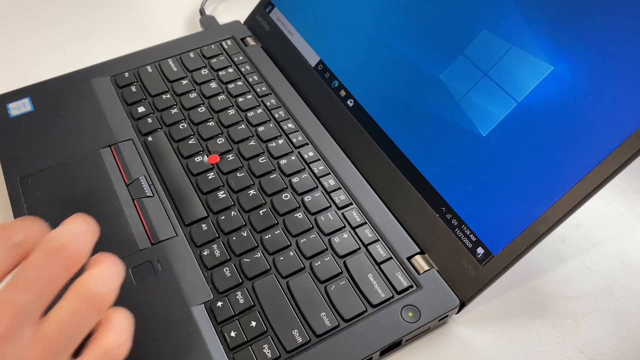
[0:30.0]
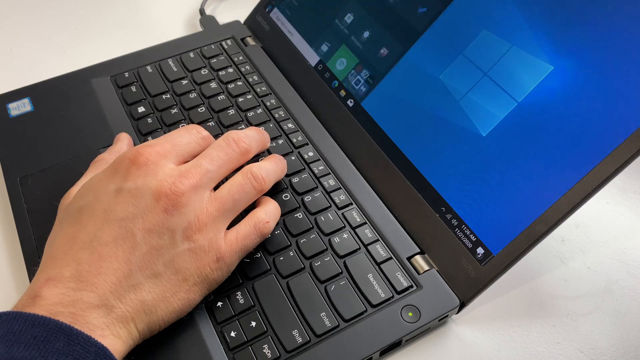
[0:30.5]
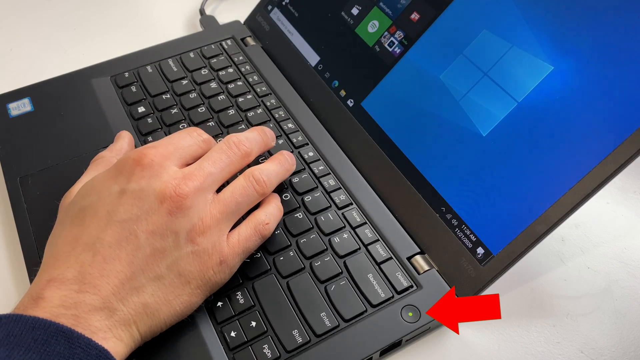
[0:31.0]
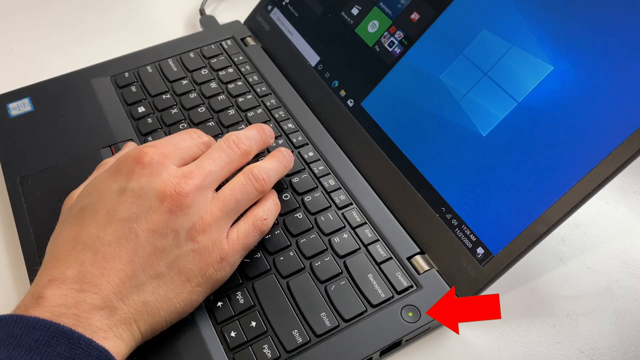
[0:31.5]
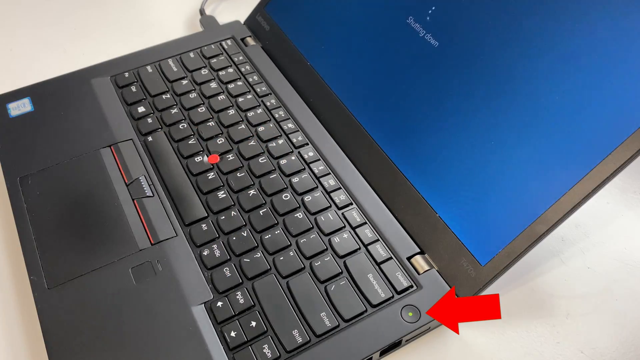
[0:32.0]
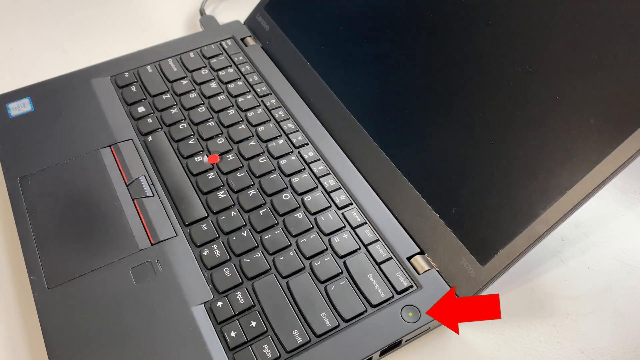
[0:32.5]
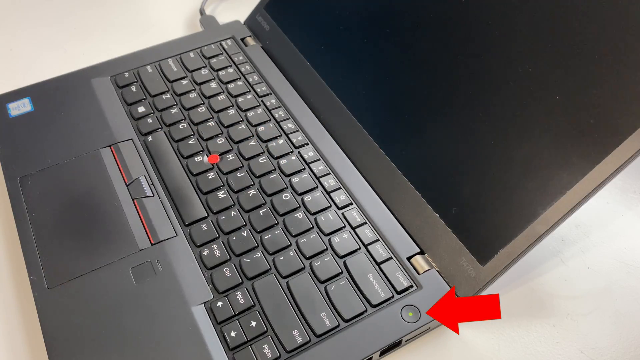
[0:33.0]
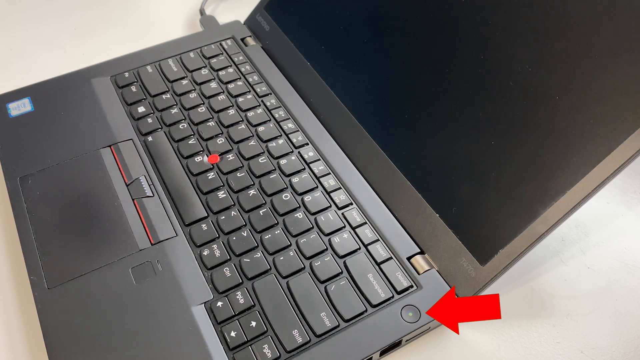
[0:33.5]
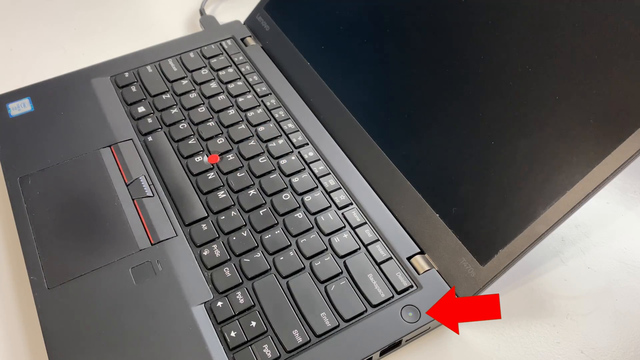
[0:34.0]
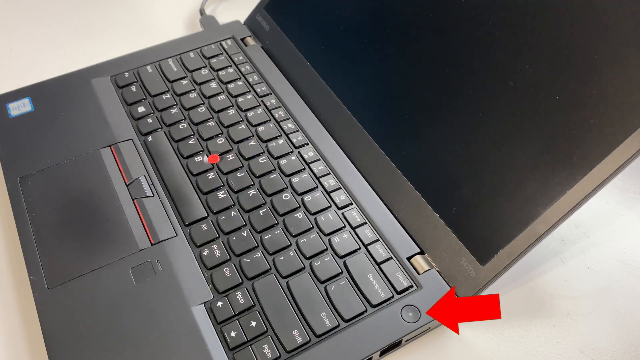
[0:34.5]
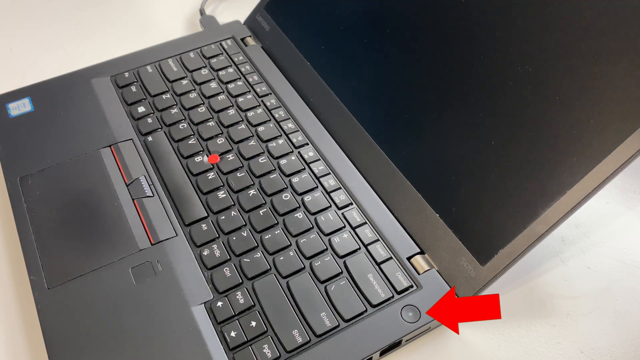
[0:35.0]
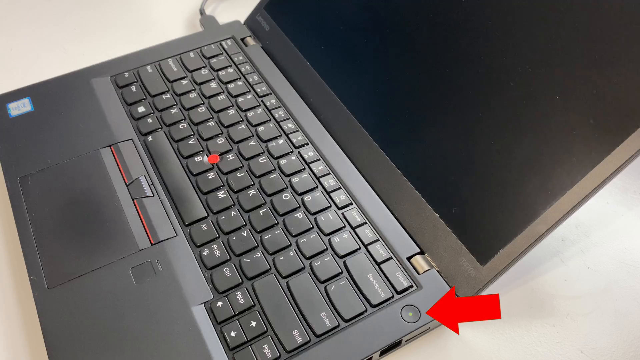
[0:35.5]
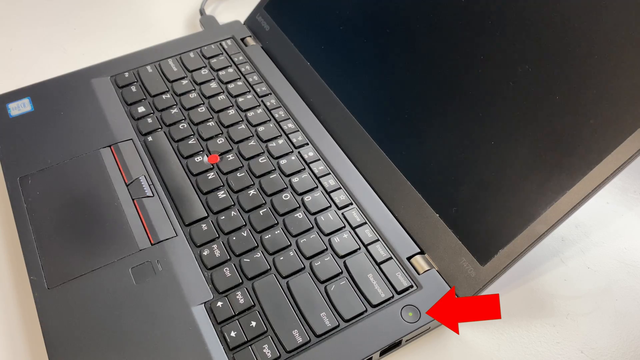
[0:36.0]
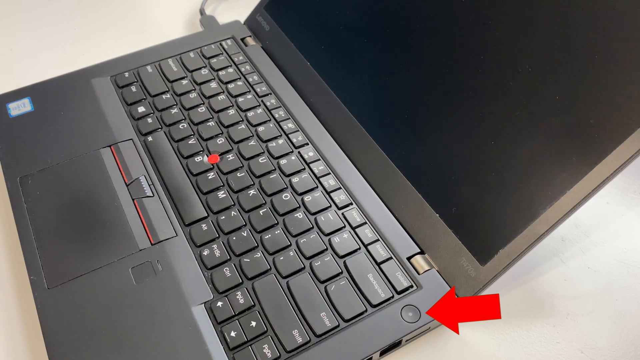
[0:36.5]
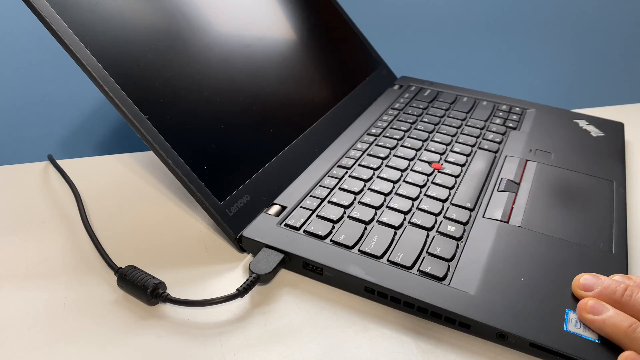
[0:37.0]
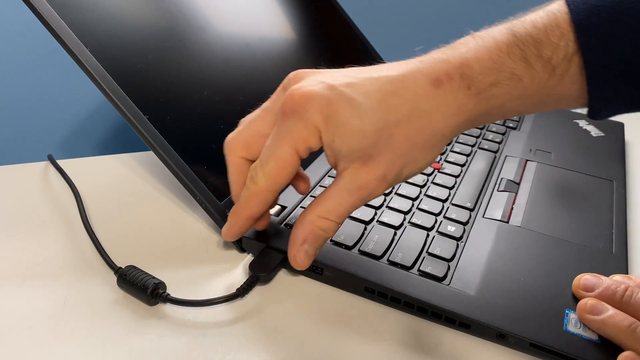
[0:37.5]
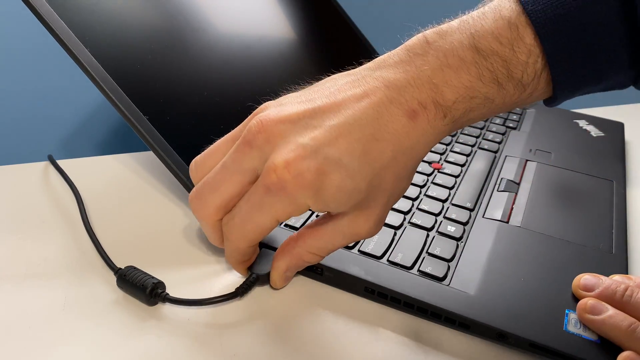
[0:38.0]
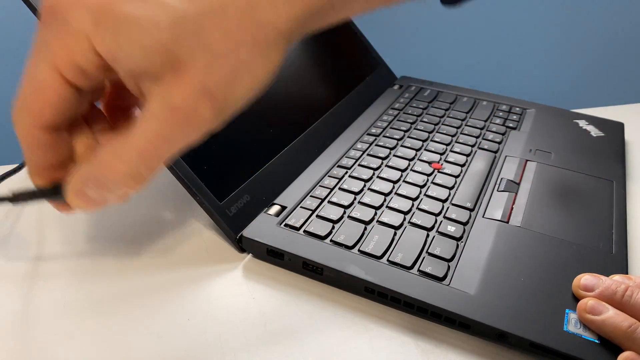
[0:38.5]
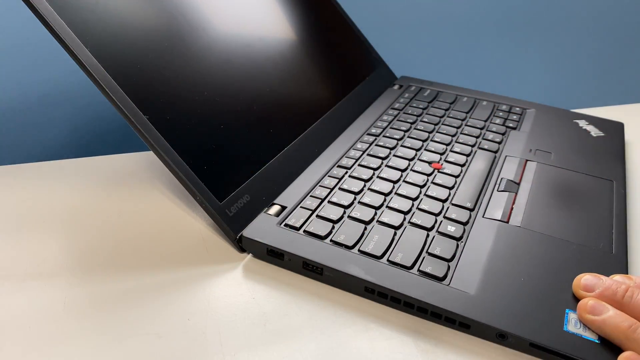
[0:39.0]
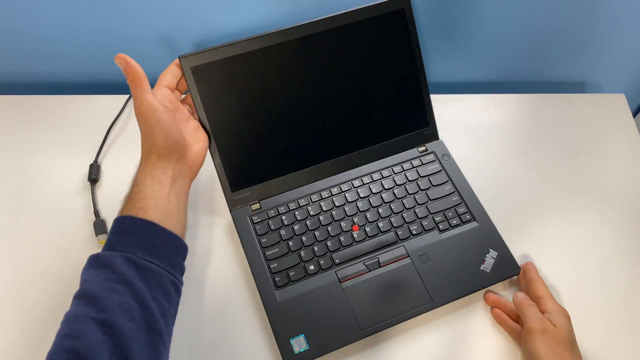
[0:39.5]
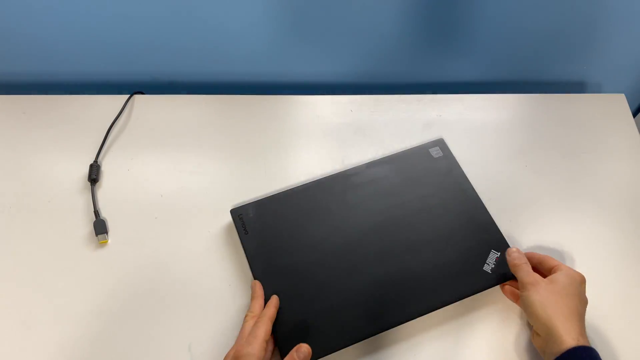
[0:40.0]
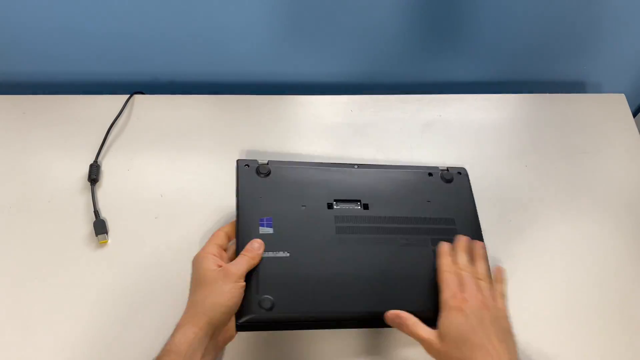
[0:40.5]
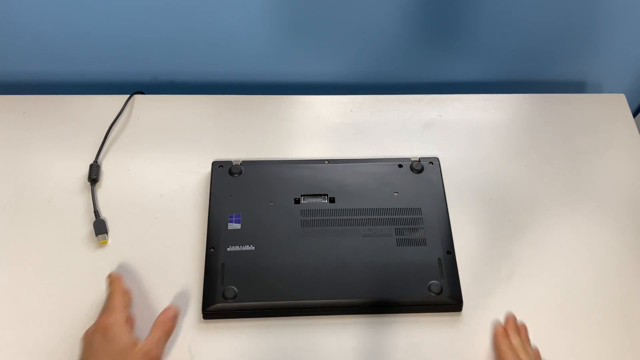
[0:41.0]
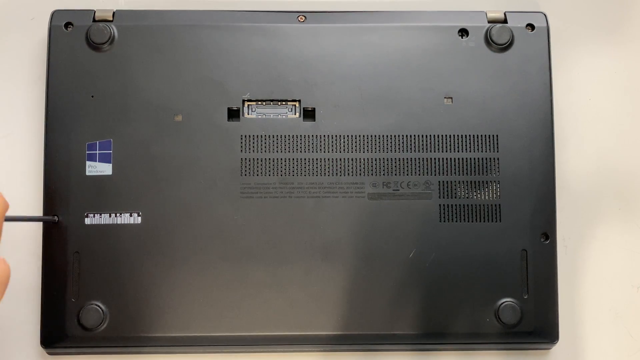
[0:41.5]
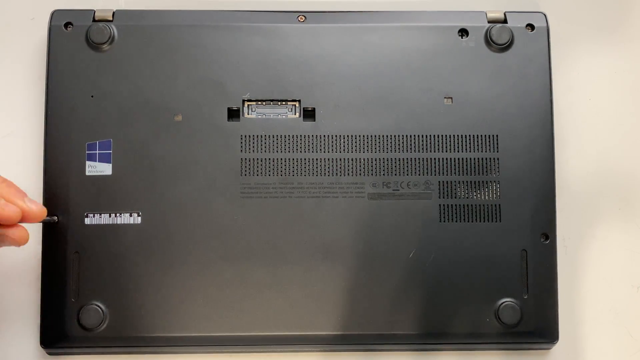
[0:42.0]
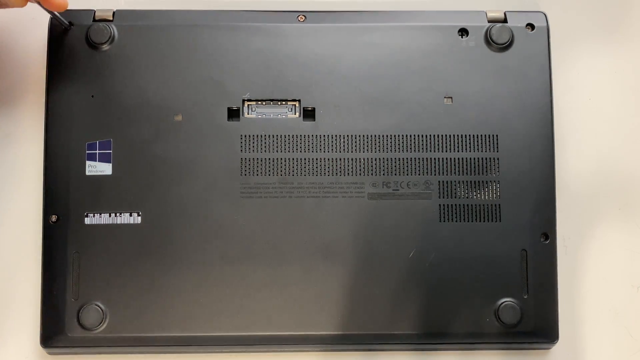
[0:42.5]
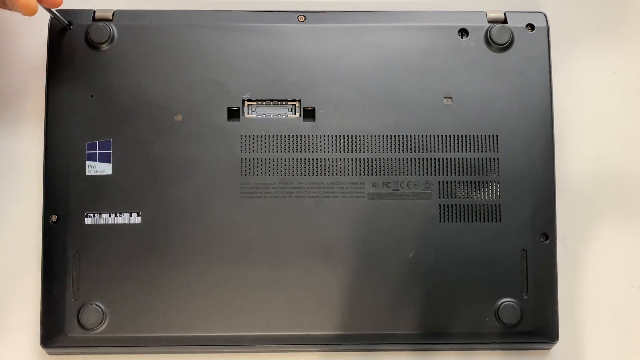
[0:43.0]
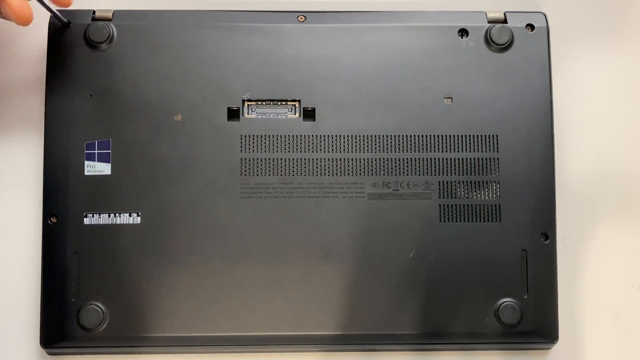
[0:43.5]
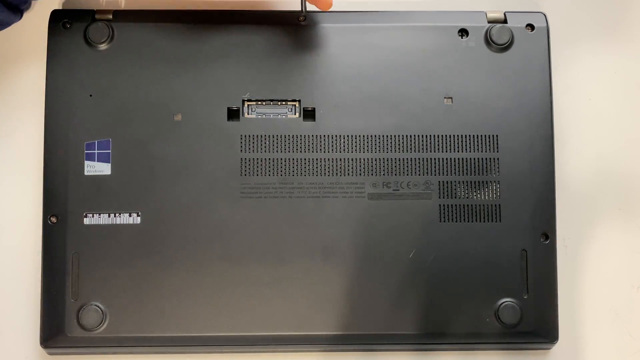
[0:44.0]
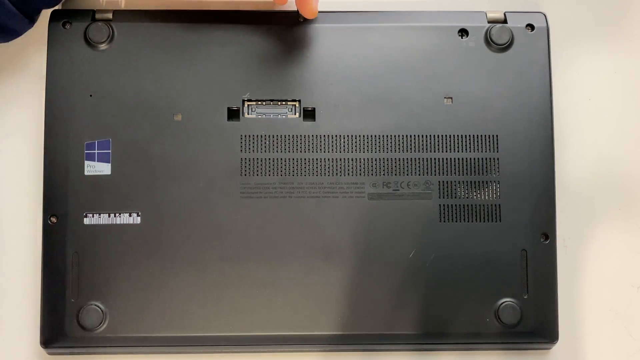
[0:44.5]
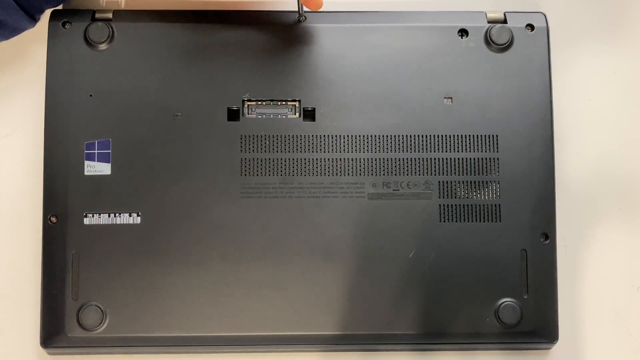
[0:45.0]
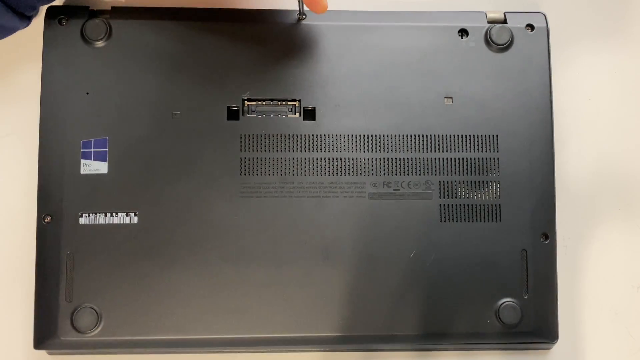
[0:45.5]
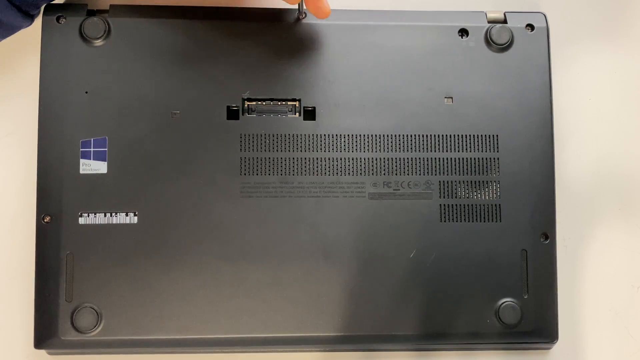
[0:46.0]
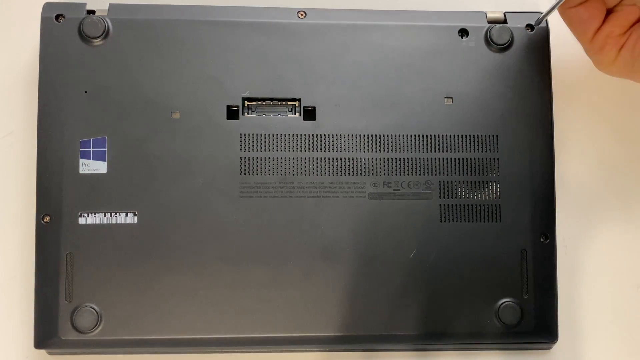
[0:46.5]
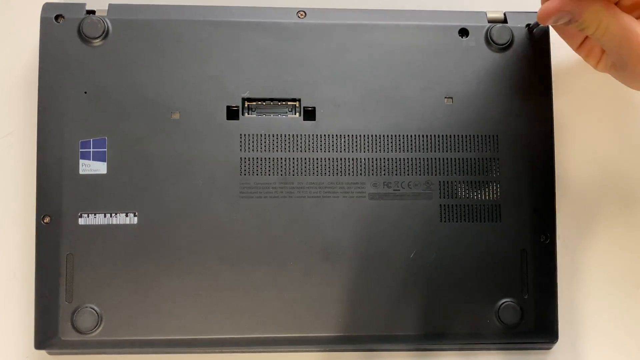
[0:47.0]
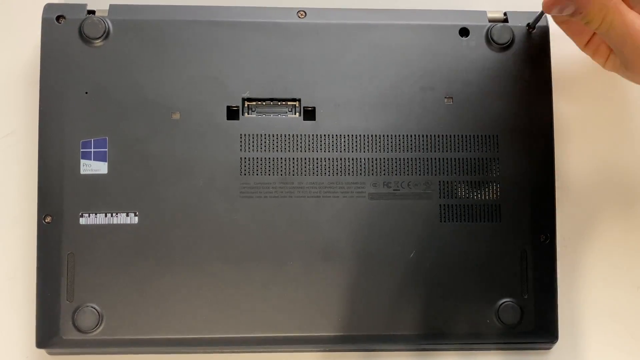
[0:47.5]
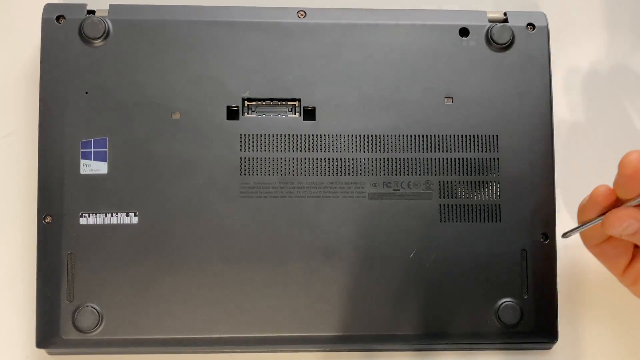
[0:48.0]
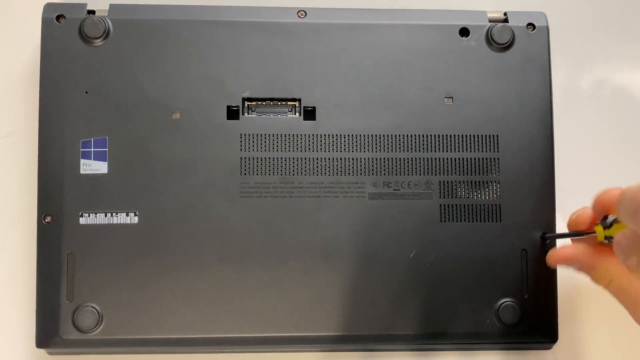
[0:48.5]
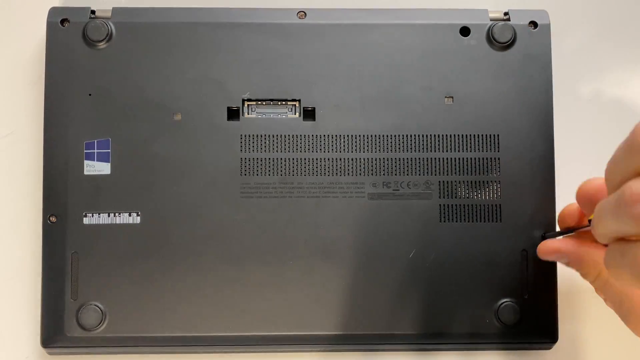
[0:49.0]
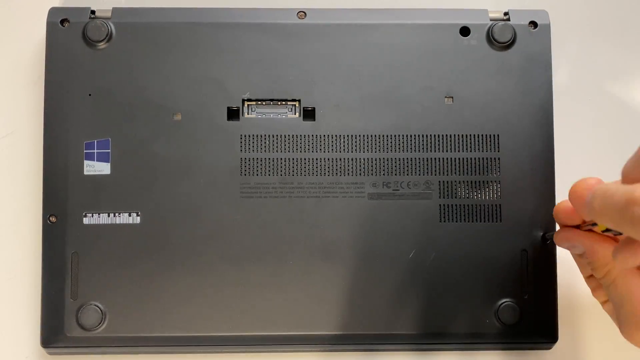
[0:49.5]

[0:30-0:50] The Windows laptop is shown again along with the man in the dress shirt. He points to a button on the laptop, possibly a power button, and presses it, and the laptop maybe turns off. Toward the end he turns the laptop upside down and starts unscrewing the back panel. His shirt appears to be blue, and his hands seem kind of skinny, so he may be younger. He is probably fixing something on the laptop. The setting does not change.